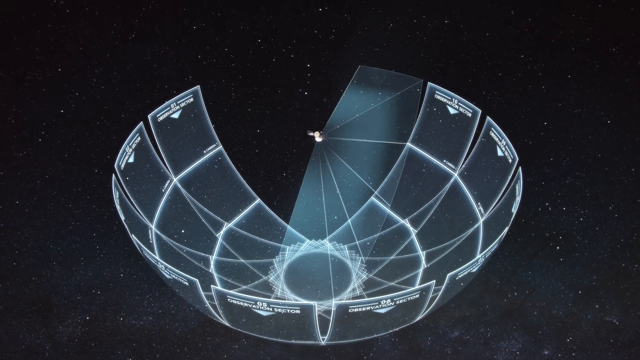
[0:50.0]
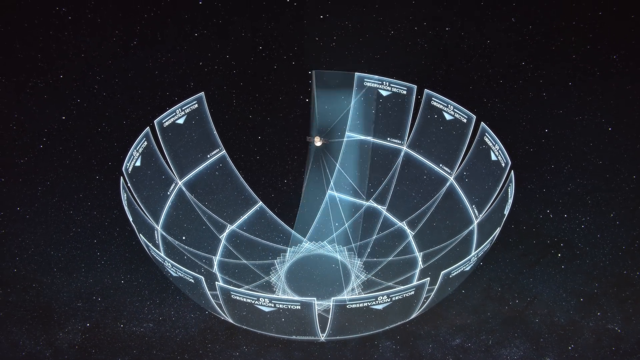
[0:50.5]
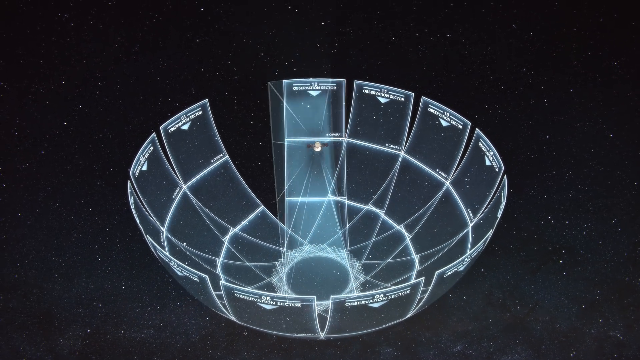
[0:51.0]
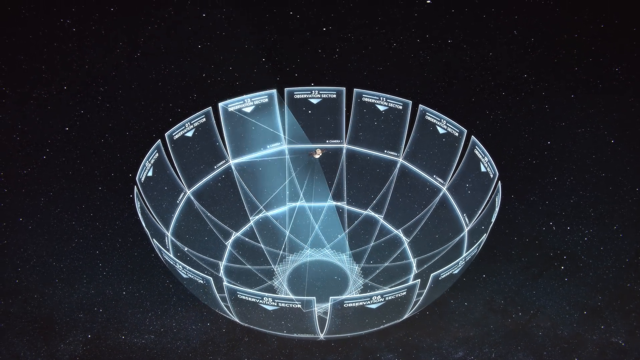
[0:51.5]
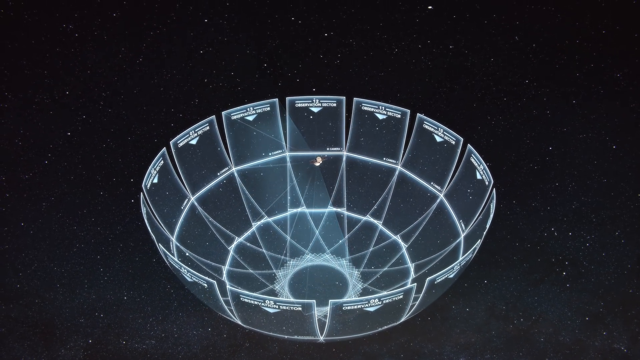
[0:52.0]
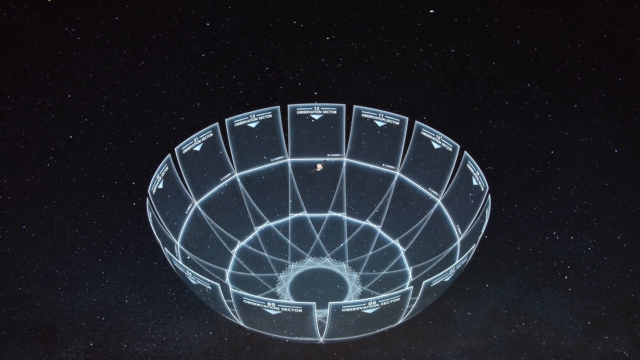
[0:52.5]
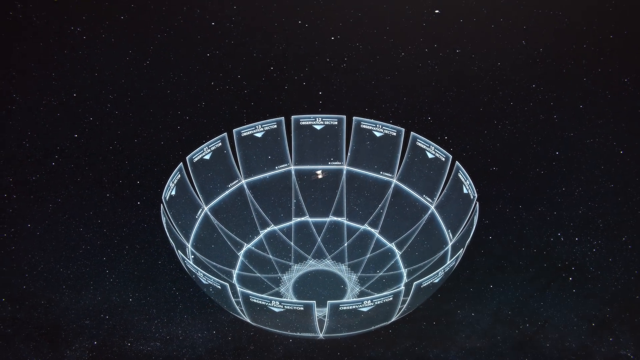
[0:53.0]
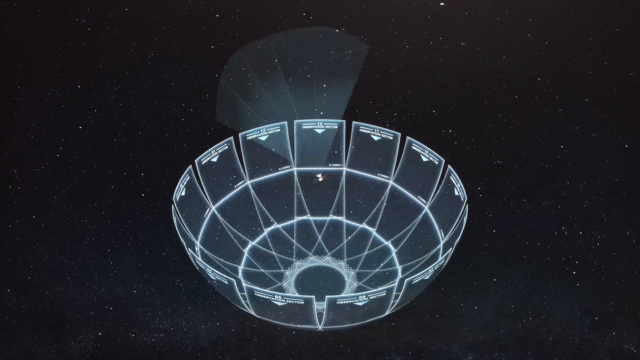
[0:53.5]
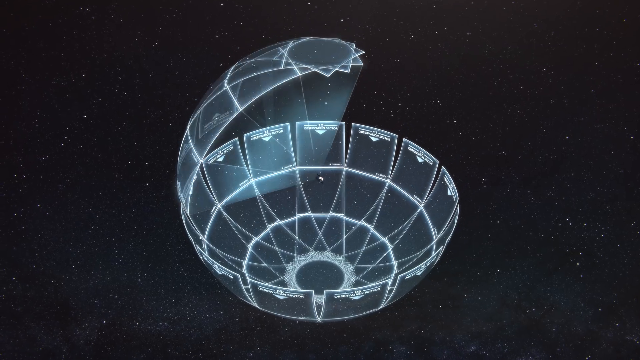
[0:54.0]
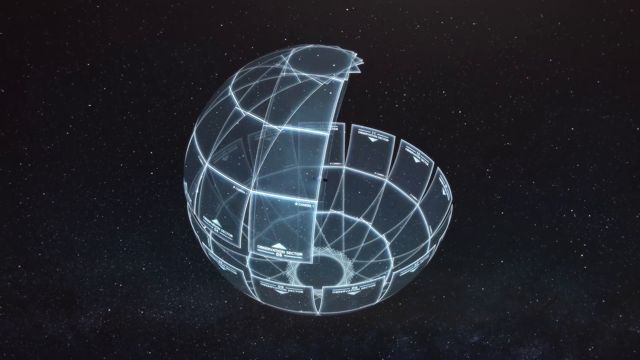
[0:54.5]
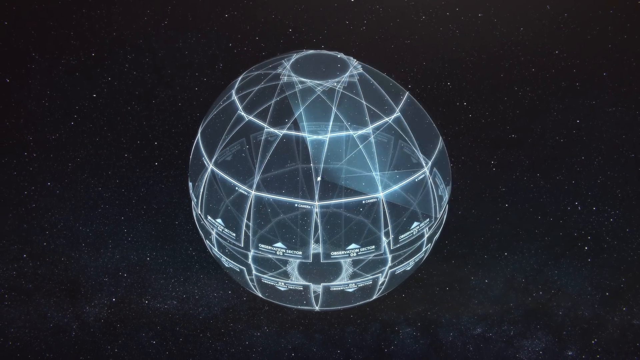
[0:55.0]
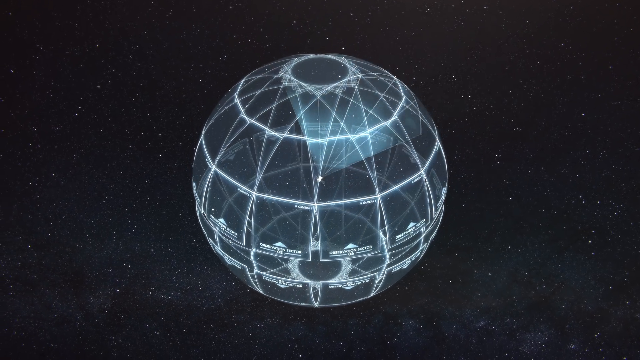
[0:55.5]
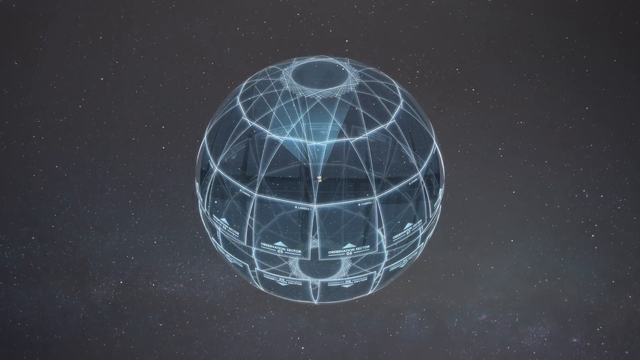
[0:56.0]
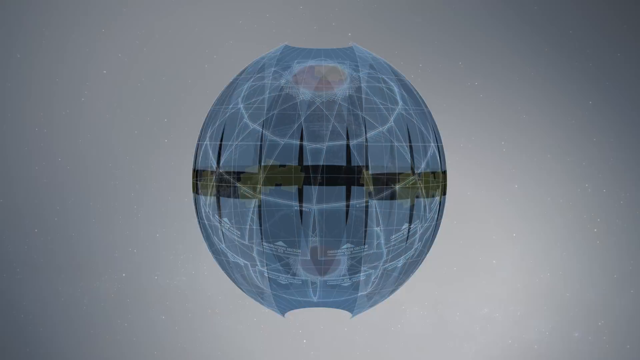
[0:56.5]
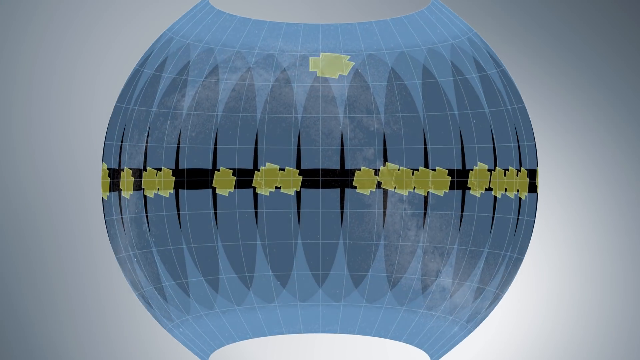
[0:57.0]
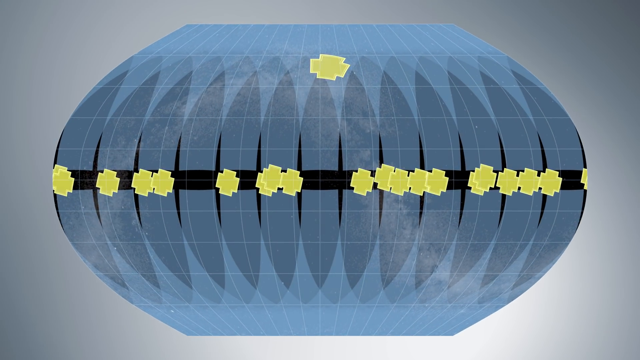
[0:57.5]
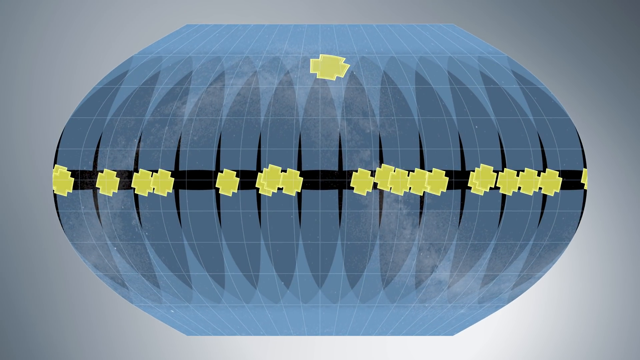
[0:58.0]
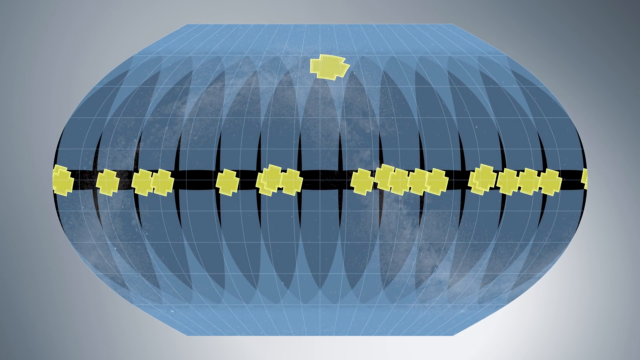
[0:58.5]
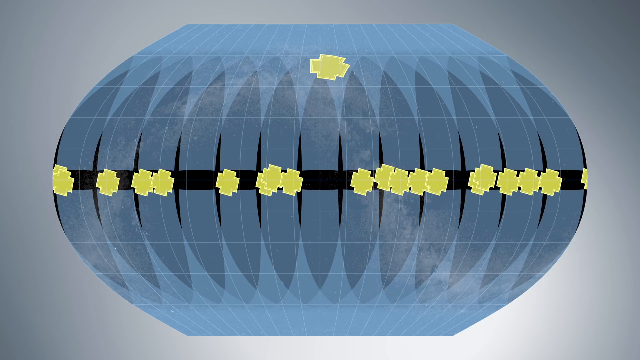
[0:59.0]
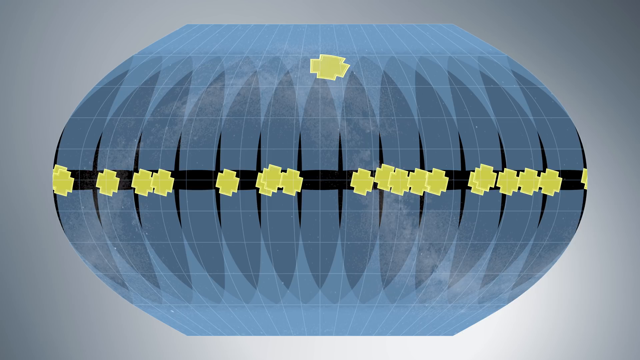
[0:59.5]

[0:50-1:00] An animated satellite floating in outer space projects an image that looks like a large, deep bowl or dish made of several segments, about 13 to 14 of them. The segments interlock at the base to form a circle at the bottom of the 3D projection. The satellite then continues projecting, and this time the projection forms a complete 3D circle with a hole at the top; it is see-through, with the satellite inside it. The 3D projection then opens up into an oval shape, as if the circle had been cut open. The oval is grey and pale blue, with yellow cross-like shapes lining its middle symmetrically in a horizontal row.